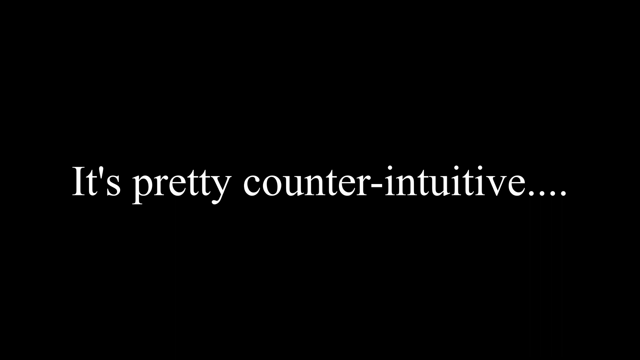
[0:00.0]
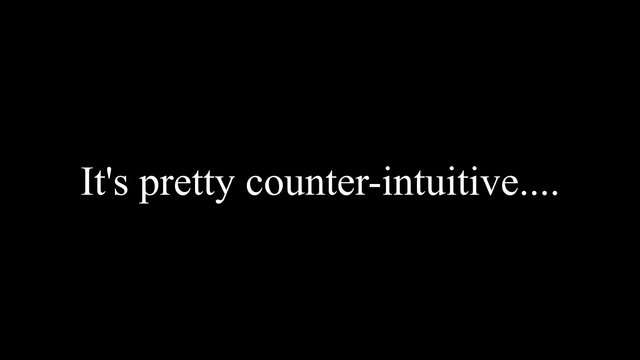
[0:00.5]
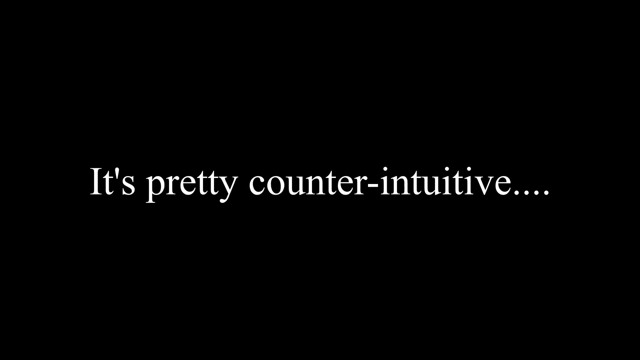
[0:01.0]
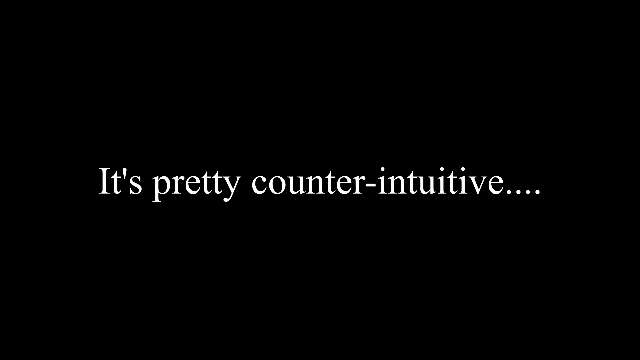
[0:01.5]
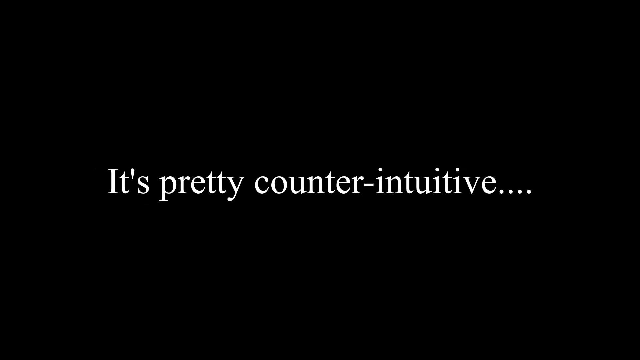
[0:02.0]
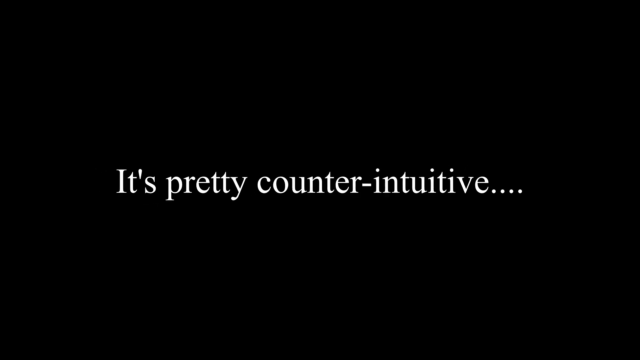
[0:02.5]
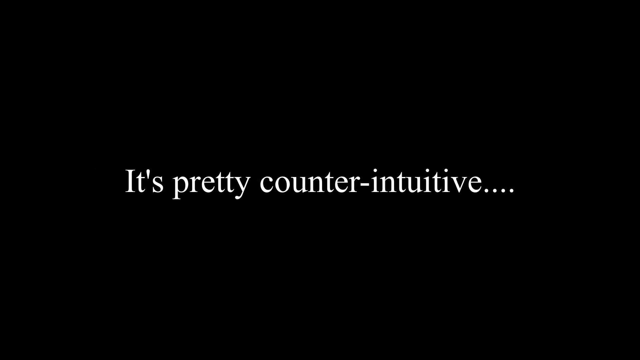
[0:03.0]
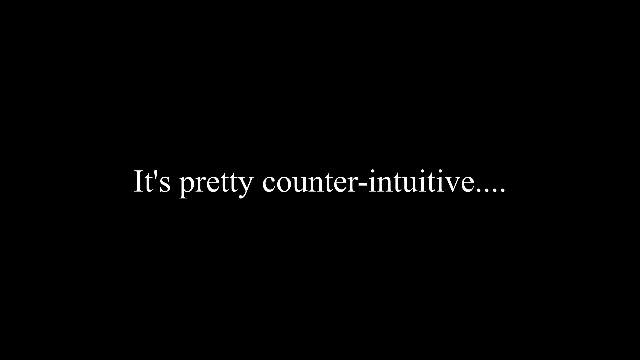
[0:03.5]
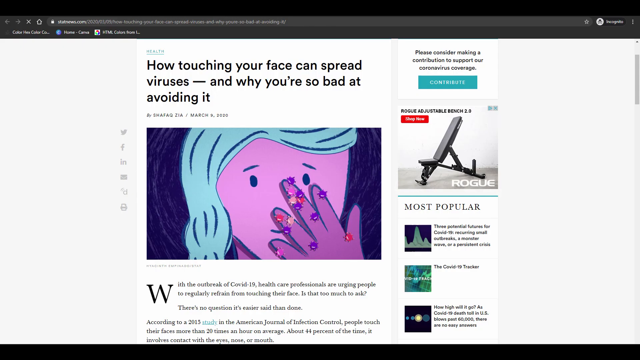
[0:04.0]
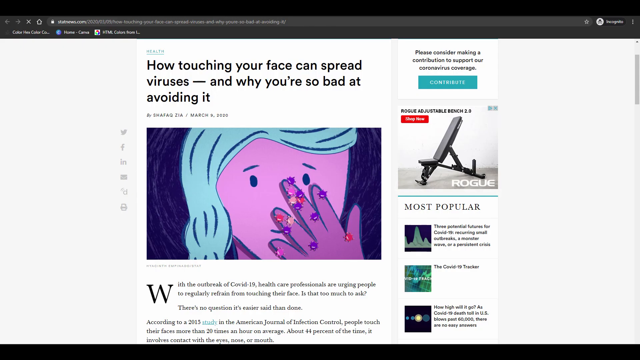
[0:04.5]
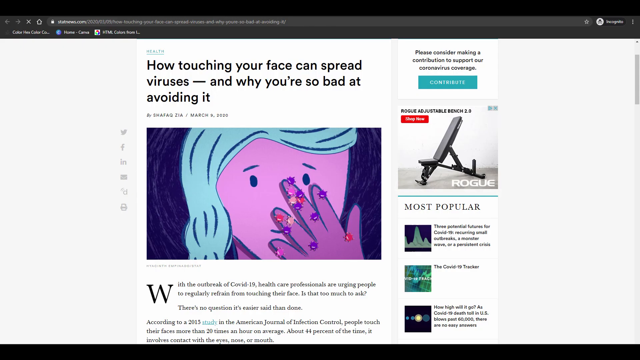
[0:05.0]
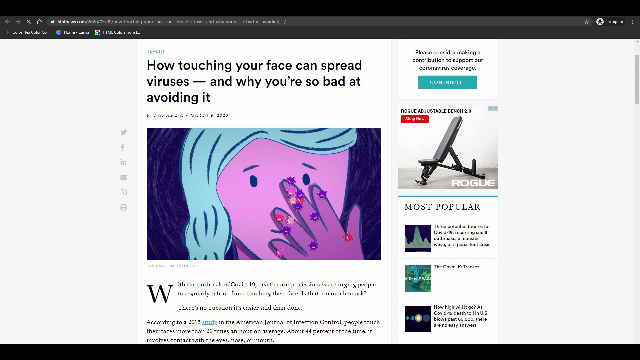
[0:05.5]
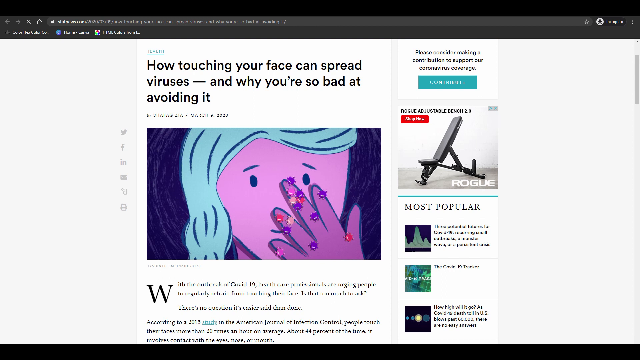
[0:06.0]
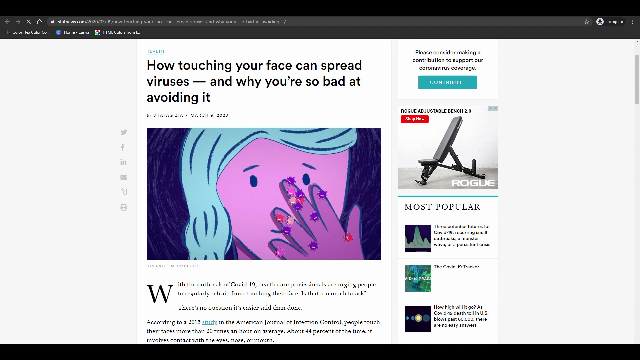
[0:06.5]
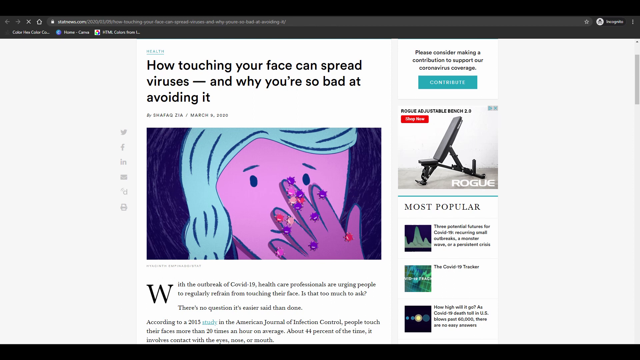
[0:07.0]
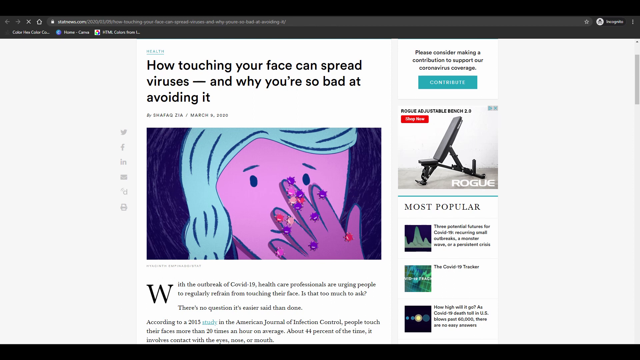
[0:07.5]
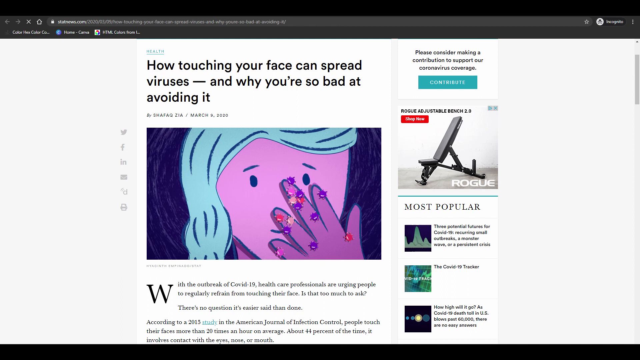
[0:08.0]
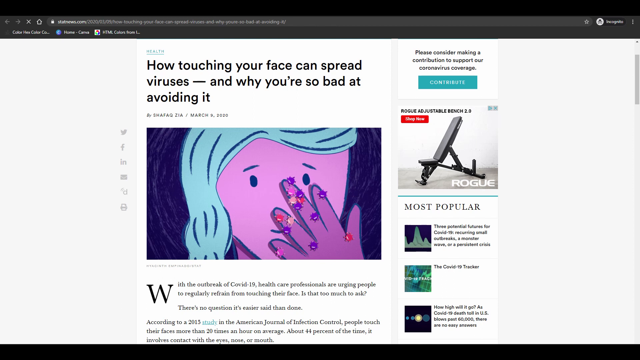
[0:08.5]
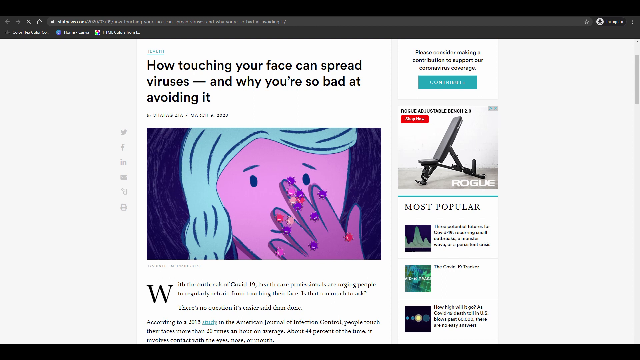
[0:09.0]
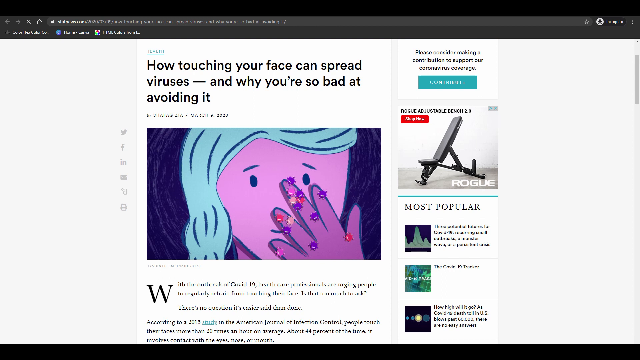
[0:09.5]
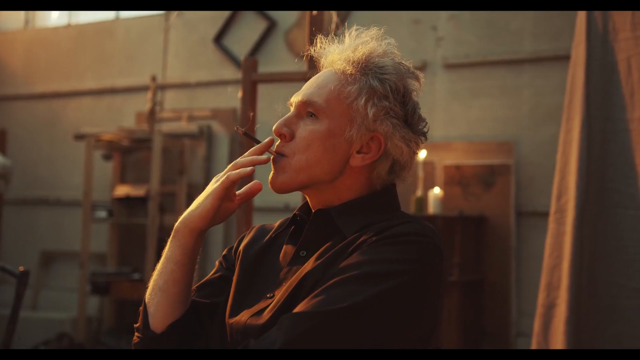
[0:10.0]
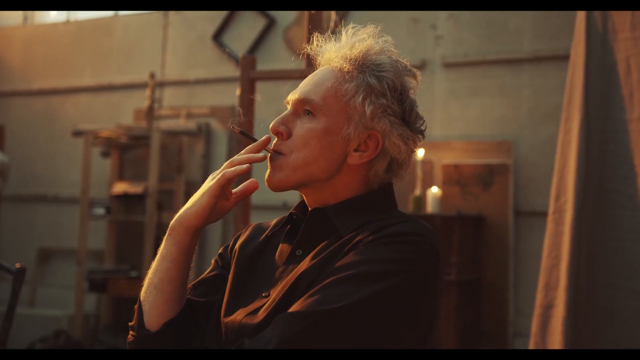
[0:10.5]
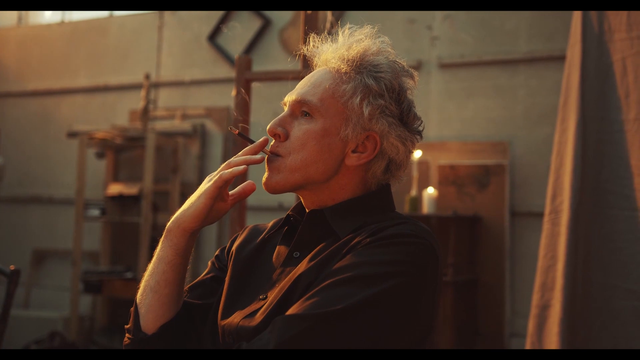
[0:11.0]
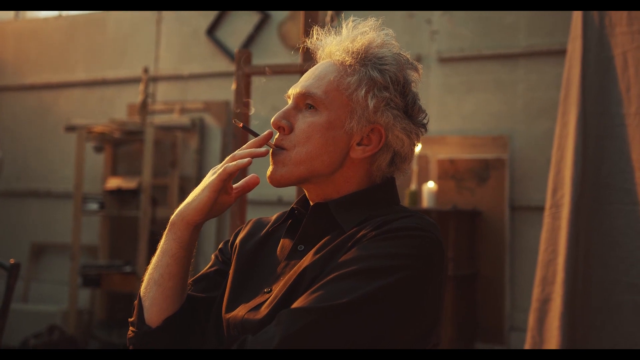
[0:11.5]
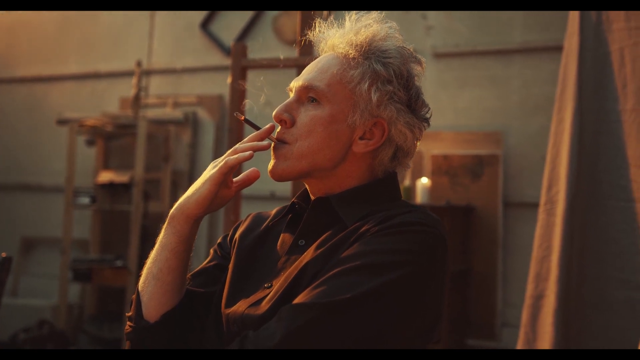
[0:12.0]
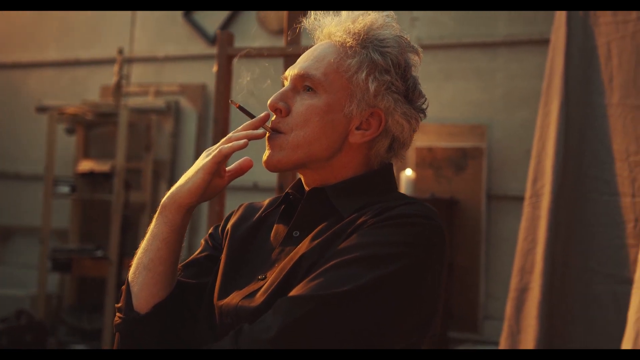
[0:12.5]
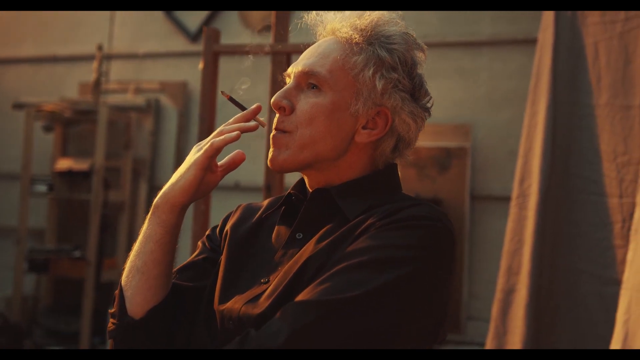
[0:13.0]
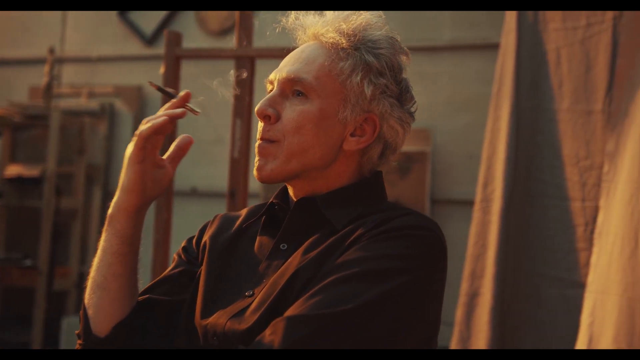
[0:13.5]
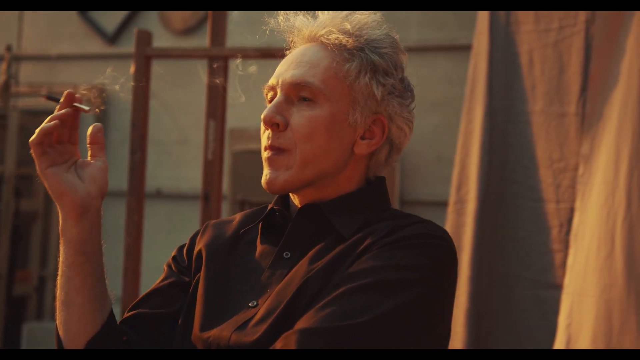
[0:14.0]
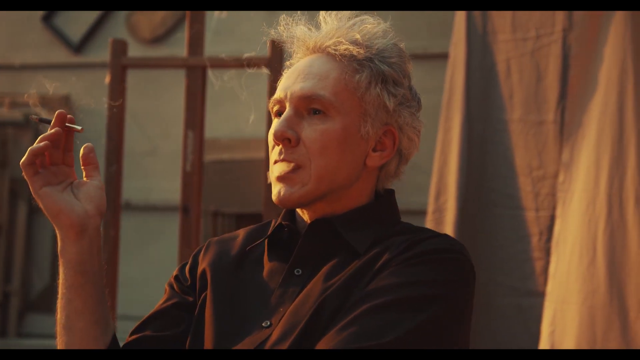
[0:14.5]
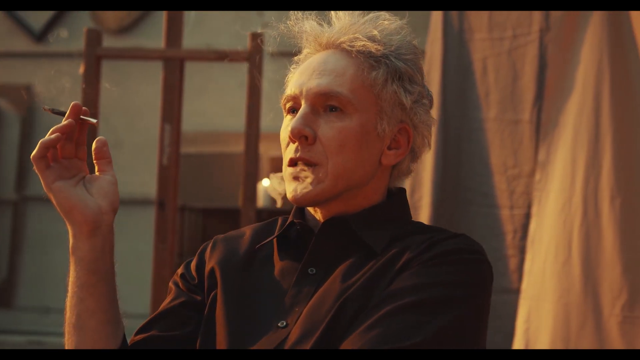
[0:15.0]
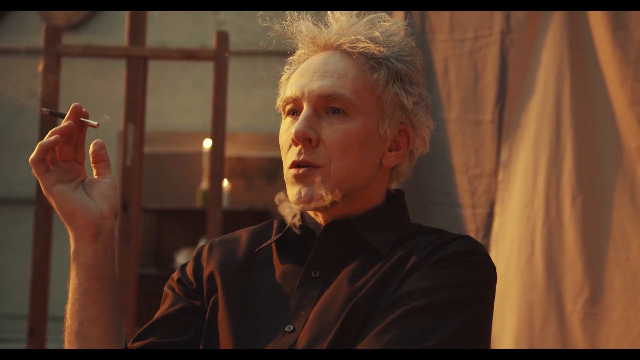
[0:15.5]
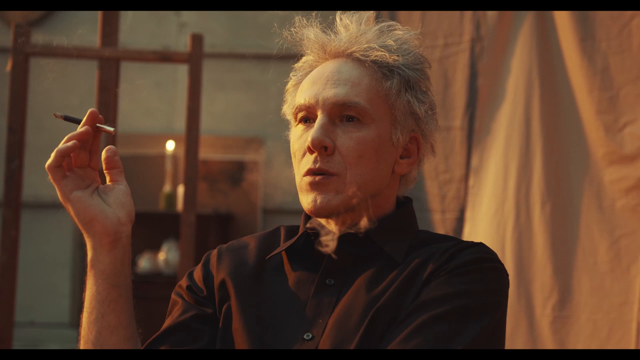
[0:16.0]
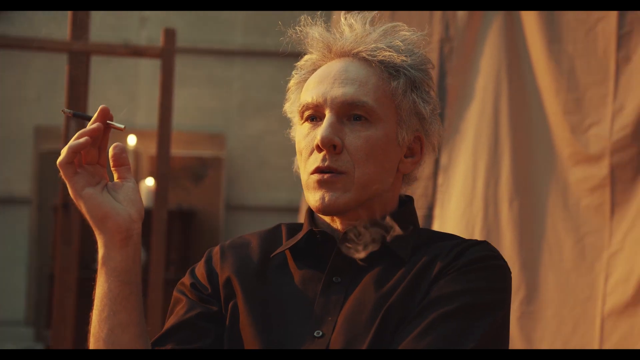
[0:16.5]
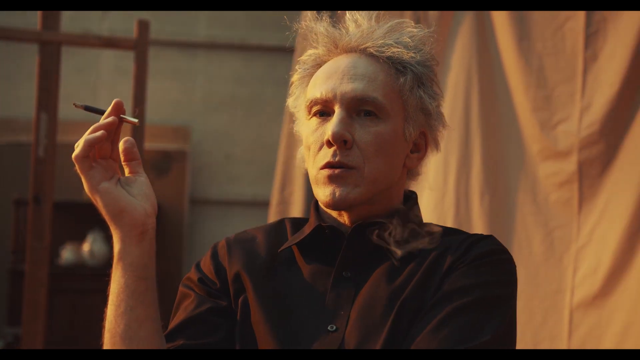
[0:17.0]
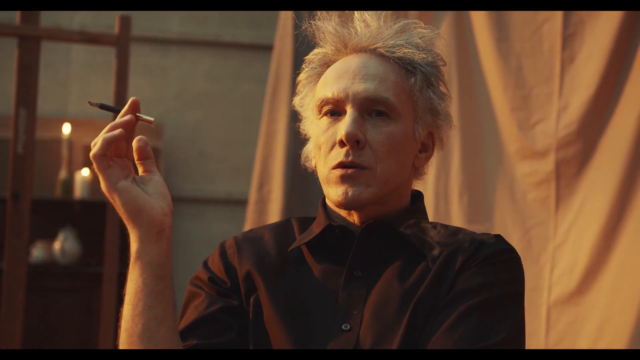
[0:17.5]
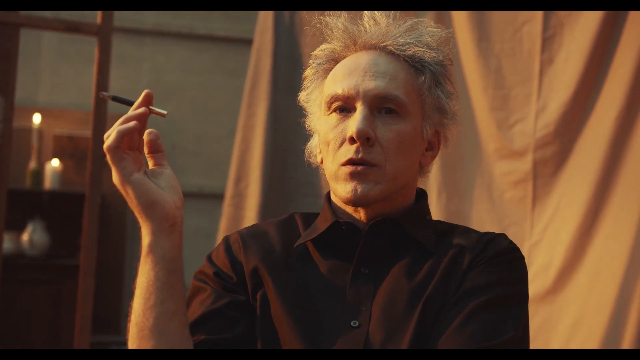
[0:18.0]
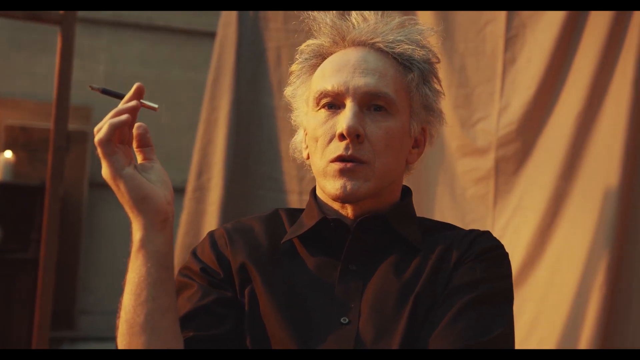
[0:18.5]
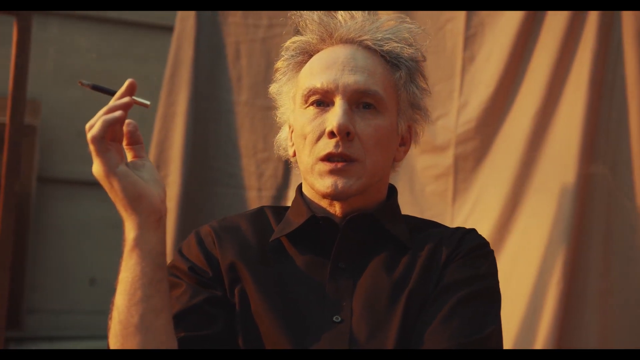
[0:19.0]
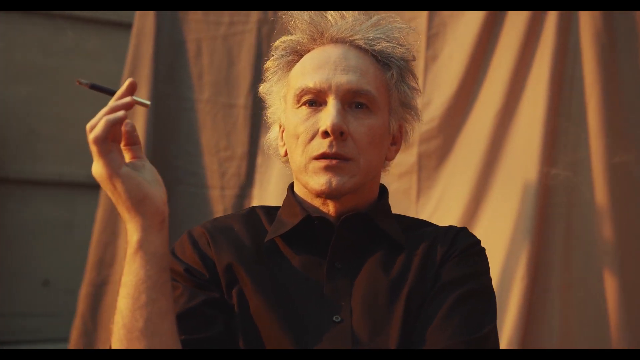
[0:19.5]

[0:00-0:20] The video opens with the sentence "it's pretty counterintuitive..." in white print on a black background, and the sentence recedes into the background. A web page then appears with the title "how touching your face can spread viruses and why you're so bad at avoiding it." Below the title is a drawing of a girl with a purple face and blue hair, whose darker purple hand reaches up to touch her nose, her cheeks, and the spot right under her eye. Beneath the drawing the text begins: "with the outbreak of COVID-19. Healthcare professionals are urging people to regularly refrain from touching their face. Is that too much to ask?" The text below that cannot be read. On the right-hand side, a bar says "please consider making a contribution to support our coronavirus coverage" and has a blue contribute button. Below it is an ad for Rogue Adjustable Benches, and below that is a listing of the most popular articles. The image then changes to a man who looks AI-generated, sitting in what looks like a studio, with wooden pieces visible behind him and a bank of windows above him. He wears a brown collared shirt and has short white hair that sticks out all over. He smokes a brown cigarette and looks directly at the camera.